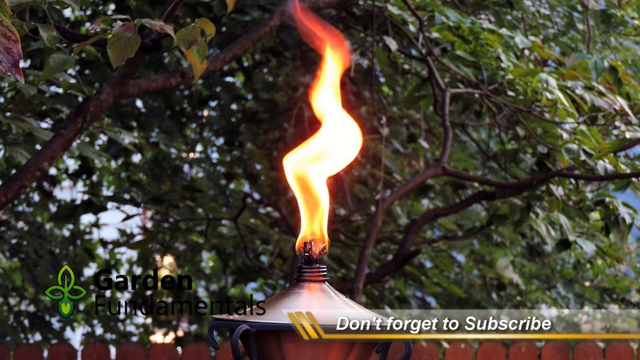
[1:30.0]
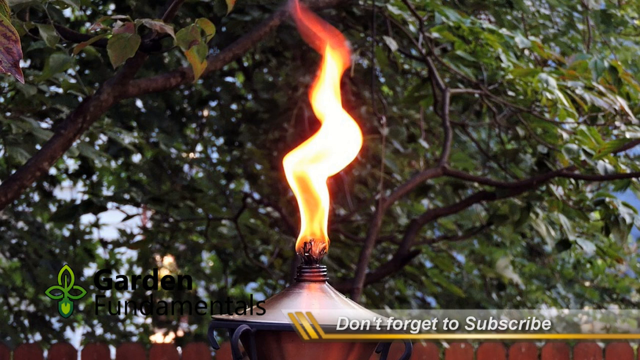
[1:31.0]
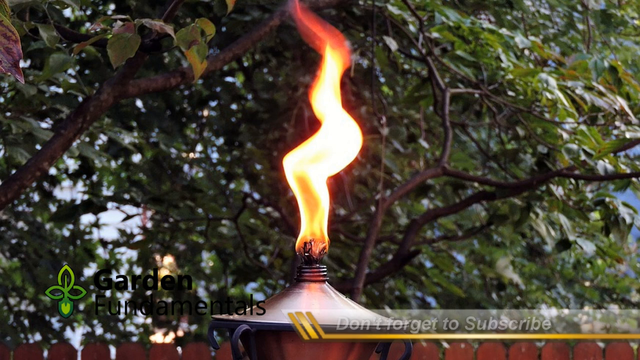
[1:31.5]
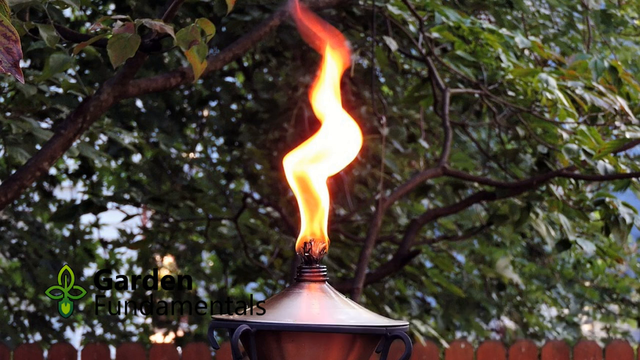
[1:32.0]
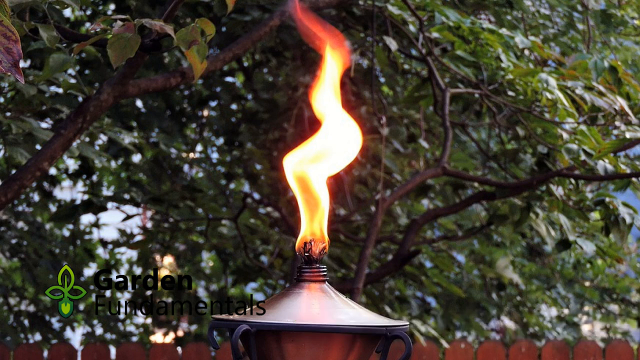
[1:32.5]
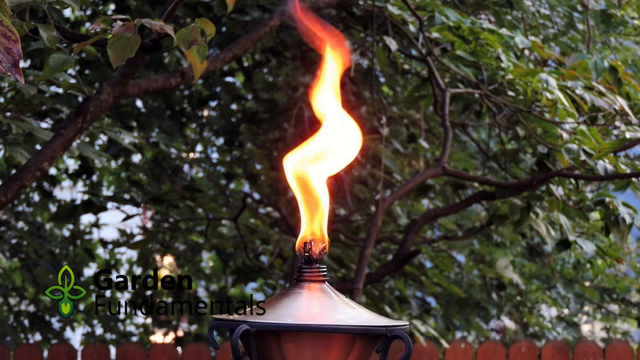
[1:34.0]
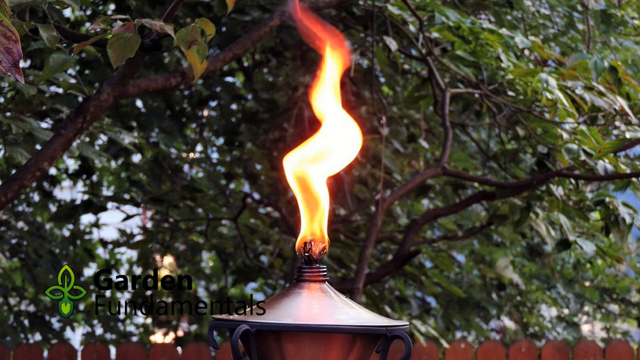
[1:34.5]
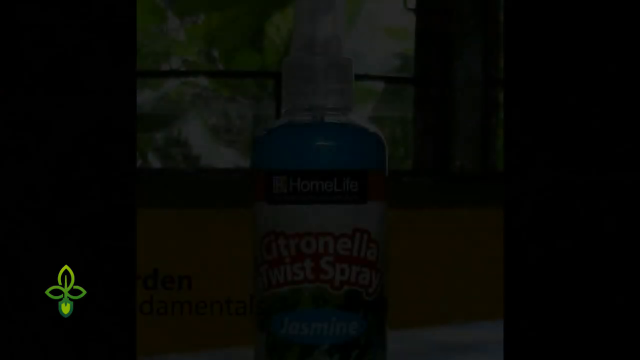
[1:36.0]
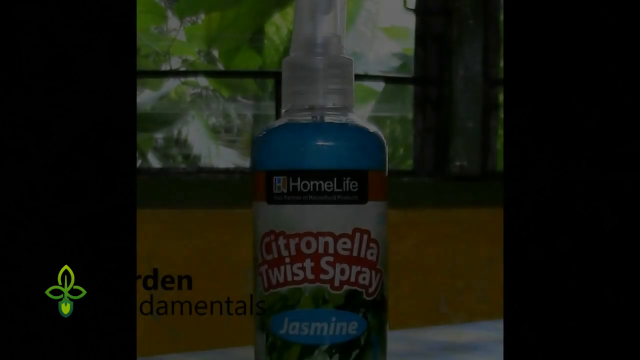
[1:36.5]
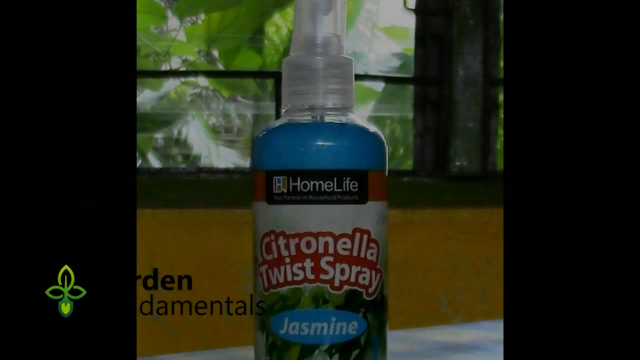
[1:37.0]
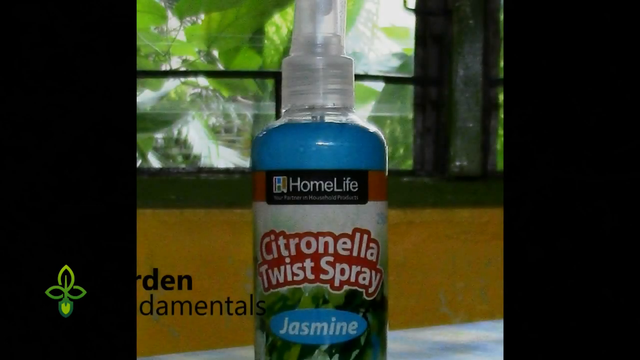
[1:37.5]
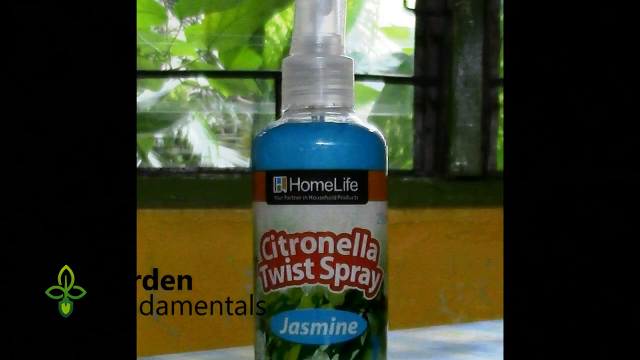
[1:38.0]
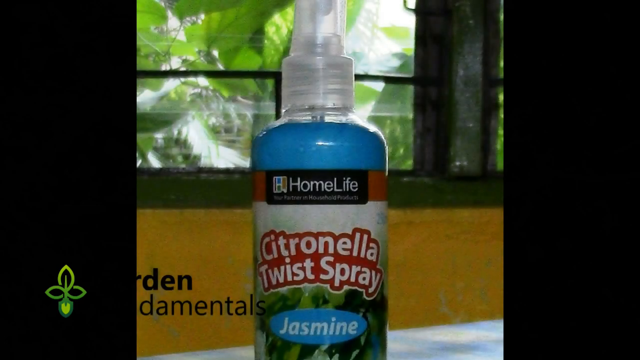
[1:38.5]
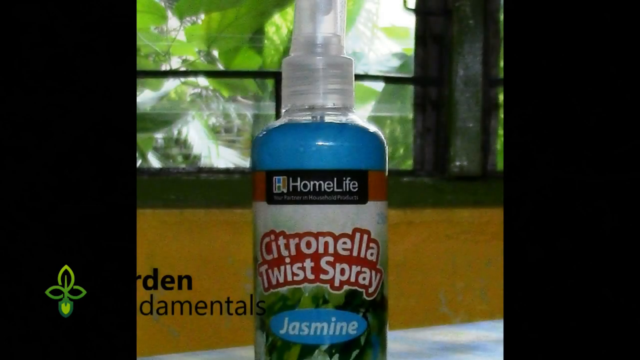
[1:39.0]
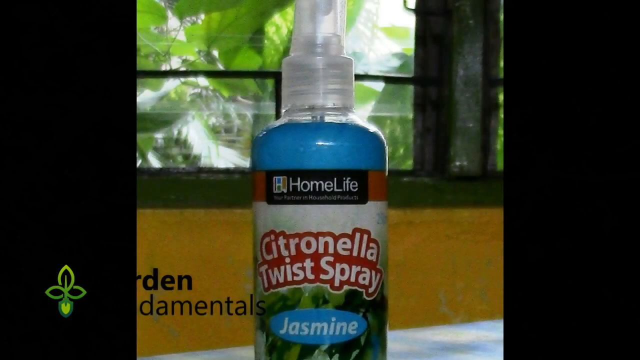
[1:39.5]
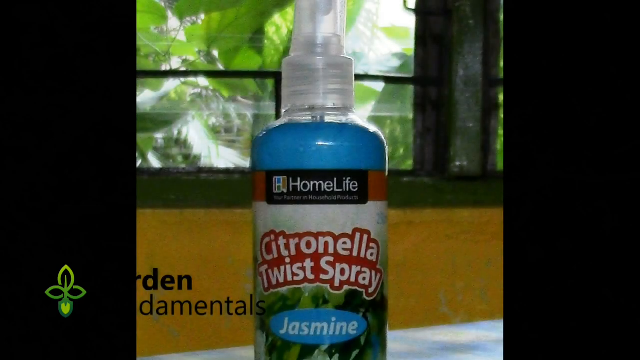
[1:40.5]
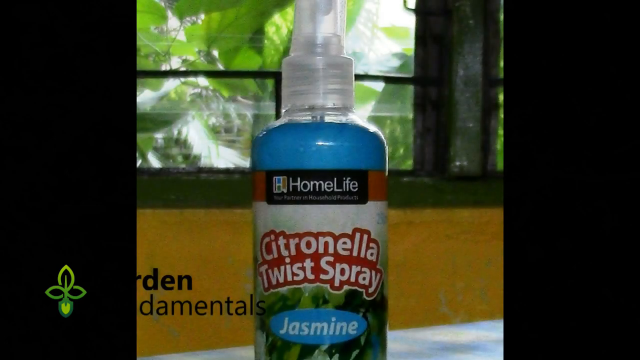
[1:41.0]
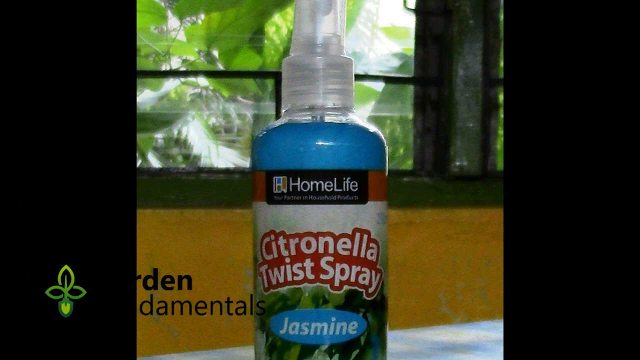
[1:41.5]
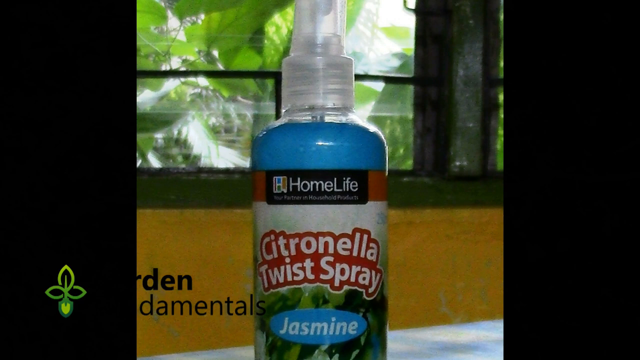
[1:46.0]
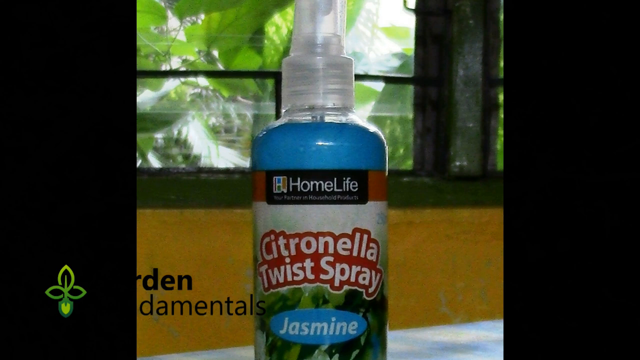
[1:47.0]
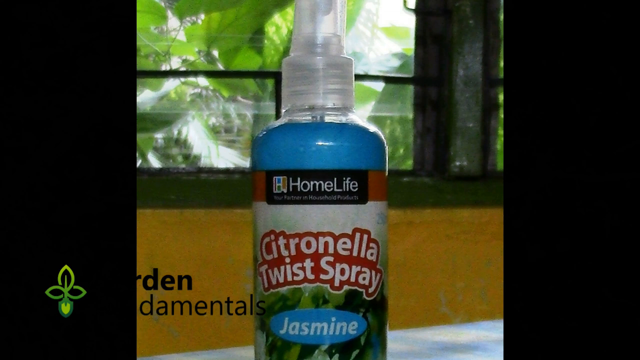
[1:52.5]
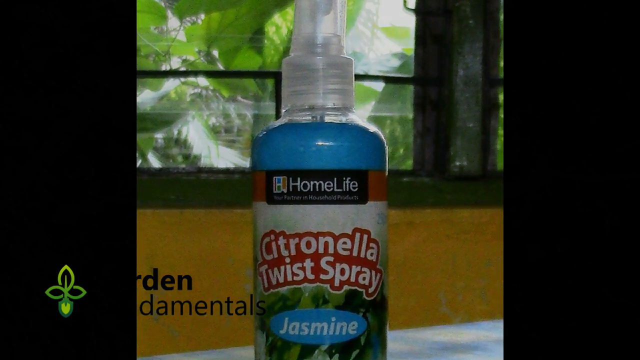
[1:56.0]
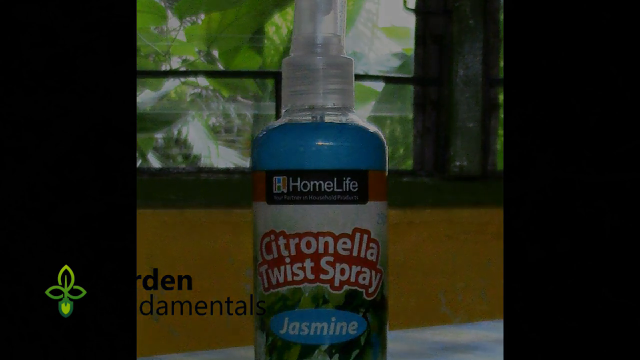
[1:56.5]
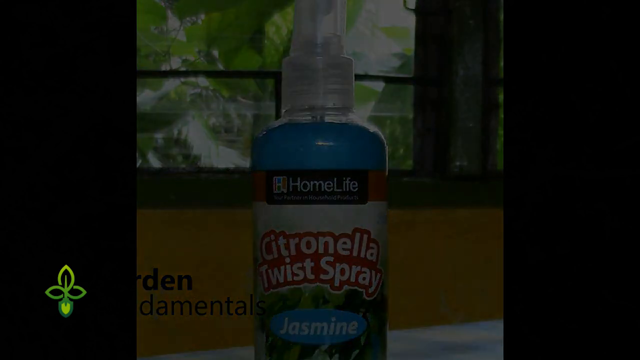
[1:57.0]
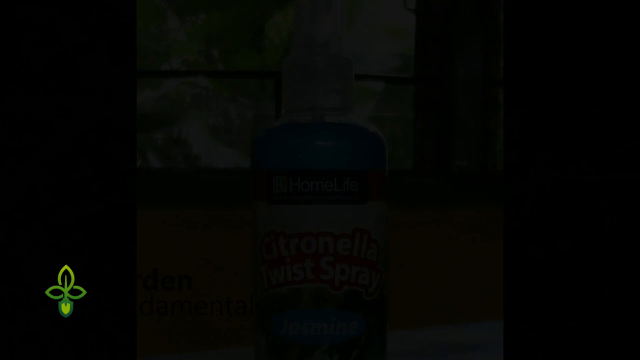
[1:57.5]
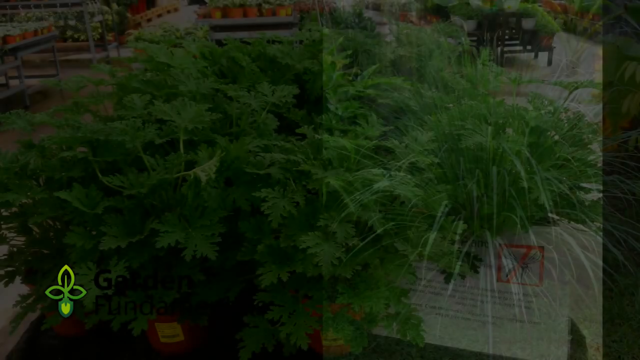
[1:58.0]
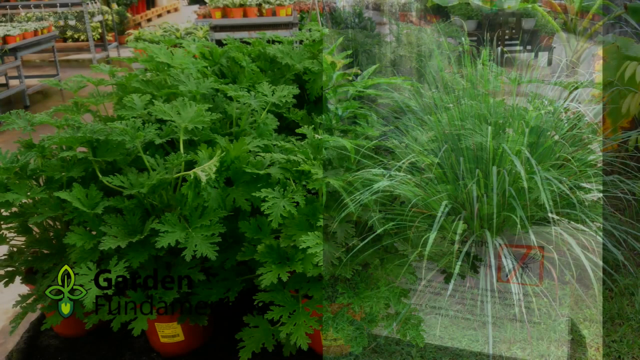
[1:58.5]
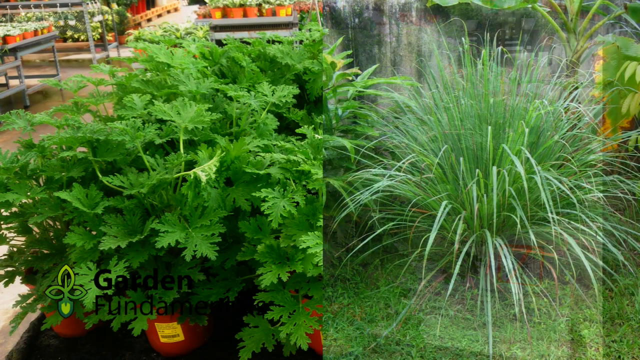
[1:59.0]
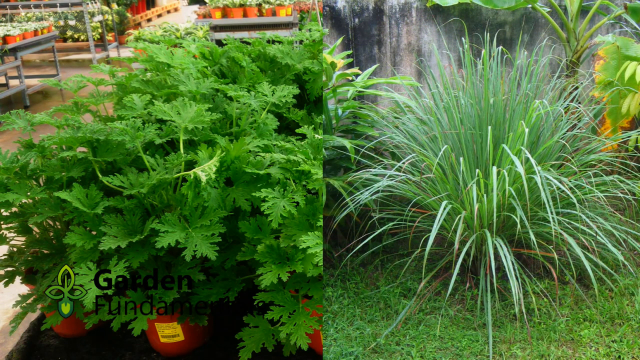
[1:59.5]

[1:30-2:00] The flame of a candle, under some trees at the top of what looks like a tiki torch, burns pretty tall and pretty bright and twists a little. The scene fades to black, and another picture fades in: what looks like a citronella twist spray by Home Life, possibly jasmine scented, with "jasmine" on the front. It is a kind of blue bottle with red text reading "citronella twist spray", and a Garden Fundamentals logo is in the bottom left. The video cuts to another scene with lemongrass on the right and the citronella plant on the left; the two plants look like they are at the garden center, in different pots, with quite a few of them.